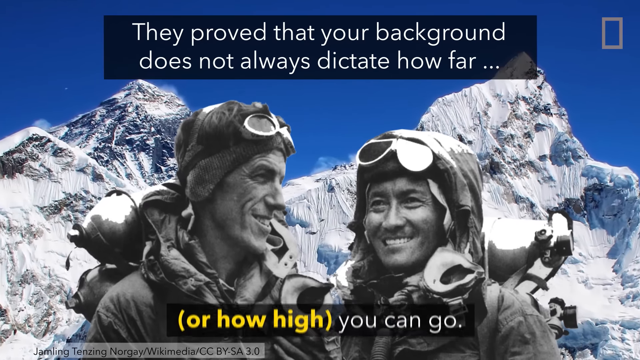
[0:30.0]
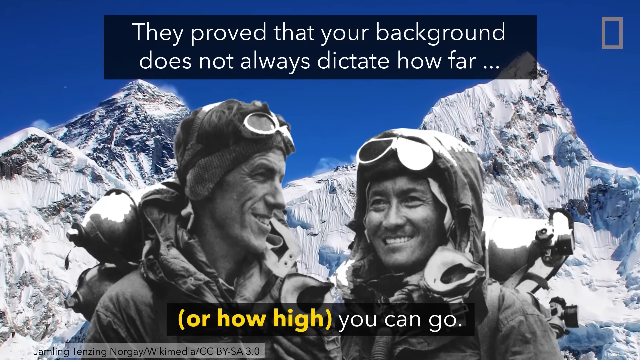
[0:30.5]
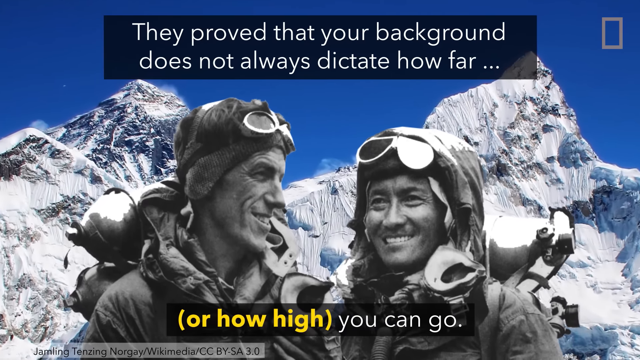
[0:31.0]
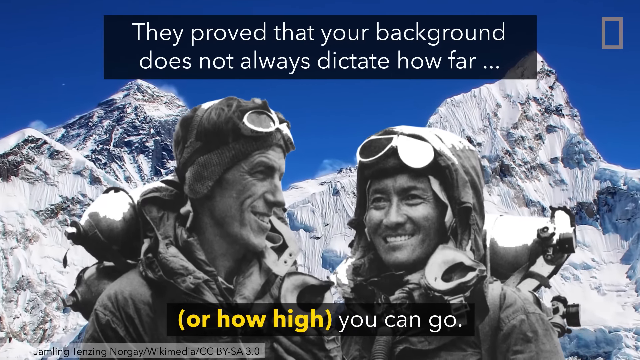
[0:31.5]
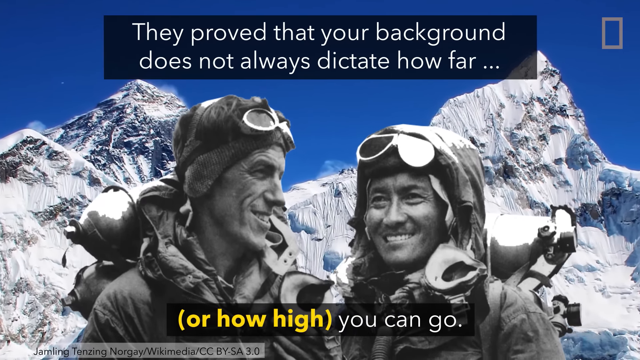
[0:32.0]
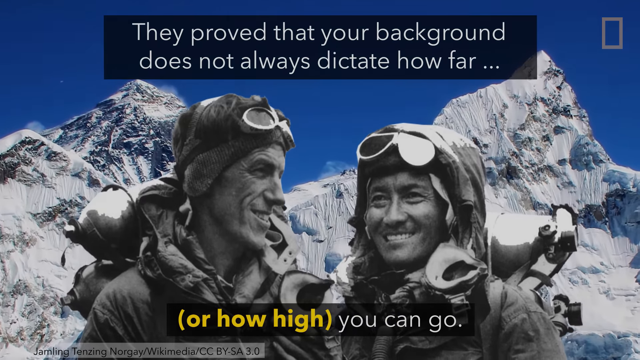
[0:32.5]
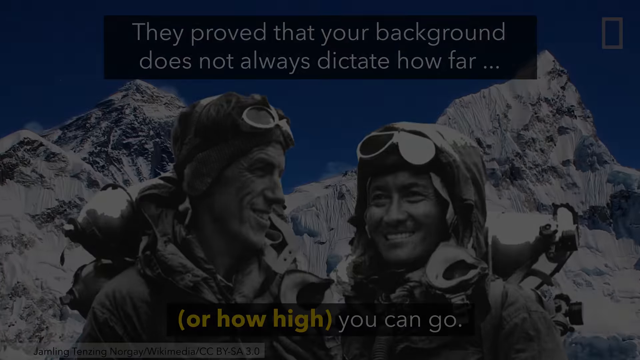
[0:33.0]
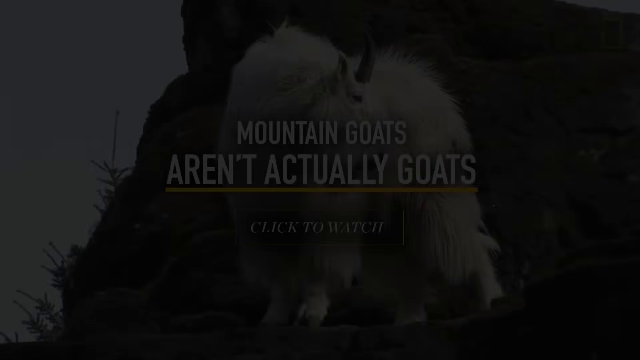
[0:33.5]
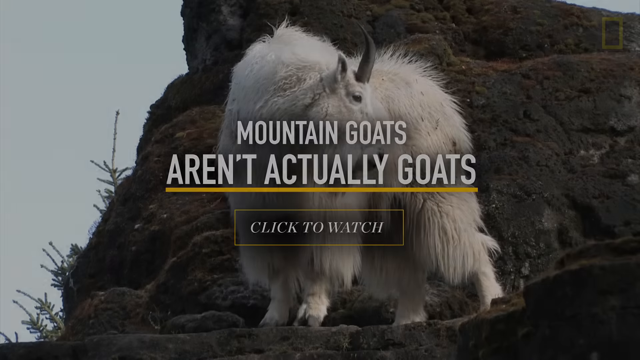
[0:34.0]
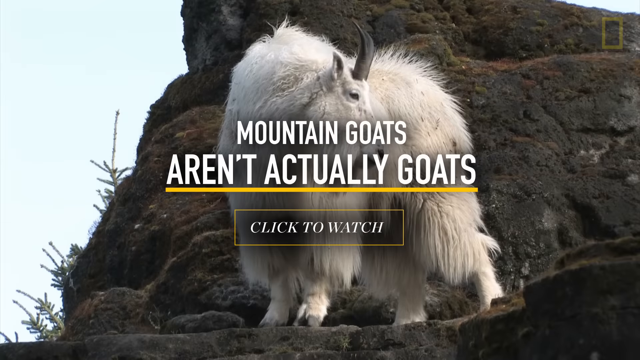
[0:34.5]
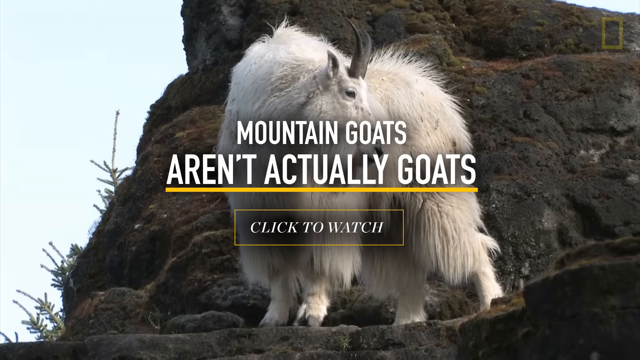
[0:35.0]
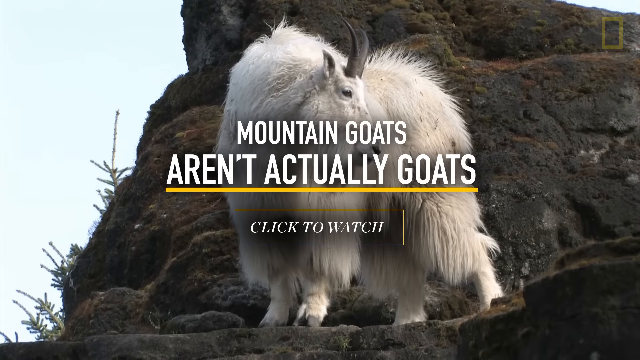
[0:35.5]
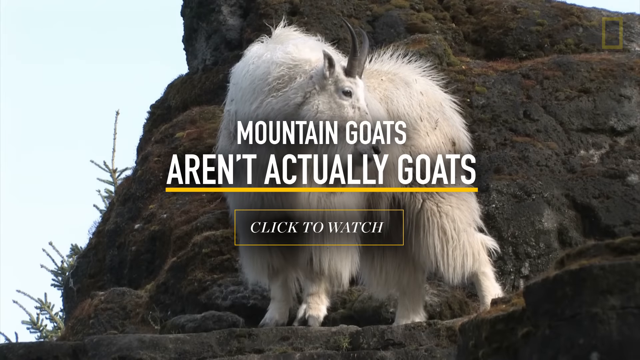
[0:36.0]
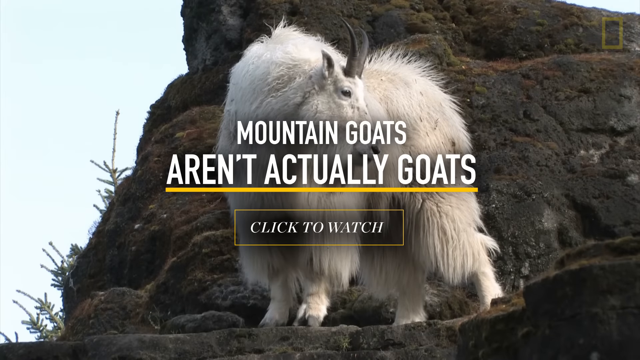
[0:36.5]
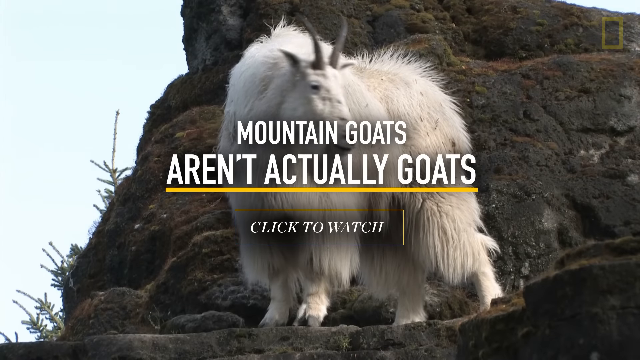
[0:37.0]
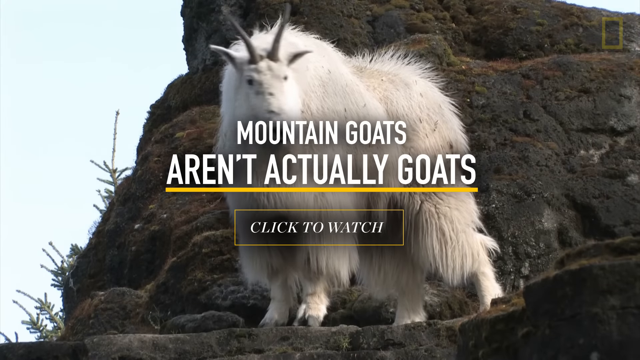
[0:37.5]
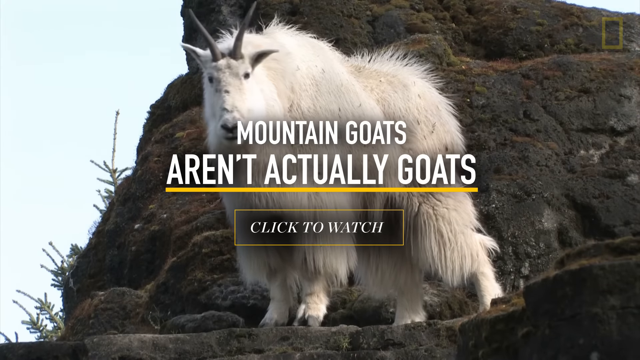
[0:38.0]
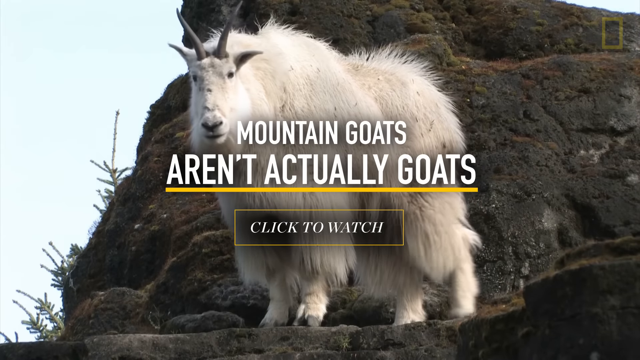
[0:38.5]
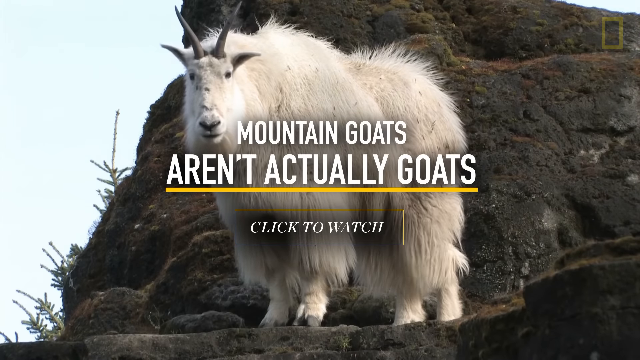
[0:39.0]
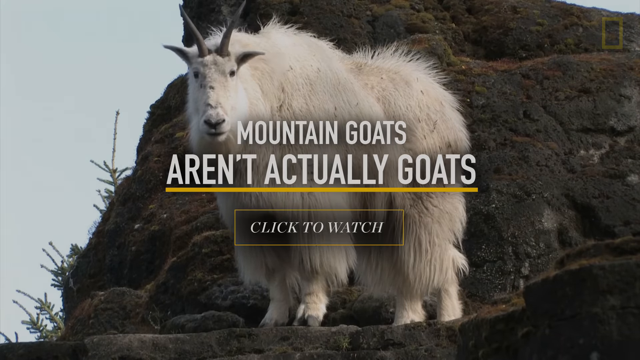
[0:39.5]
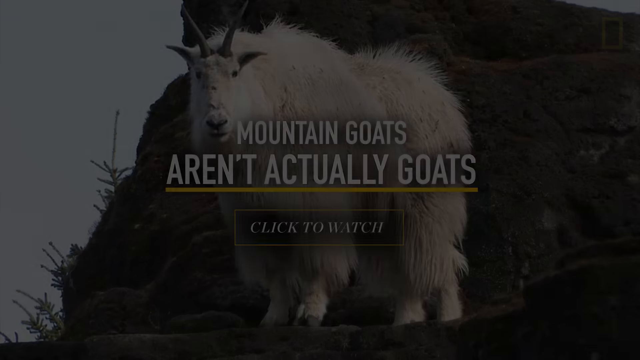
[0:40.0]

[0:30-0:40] An image shows Mount Everest in the background, with two of its snow-covered peaks against a brilliant blue, cloudless sky. In the foreground are two men who have previously climbed Mount Everest. Both men have goggles kind of on their foreheads, on top of their hats. A black text box with white font across the top of the image reads "they prove that your background does not always dictate how far or how high you can go." The screen goes black, and the next image shows the side of a mountain with a very fluffy goat with quite big horns on it. The text on the screen reads "Mountain goats aren't actually goats," and a CTA box contains the text "Click to watch."